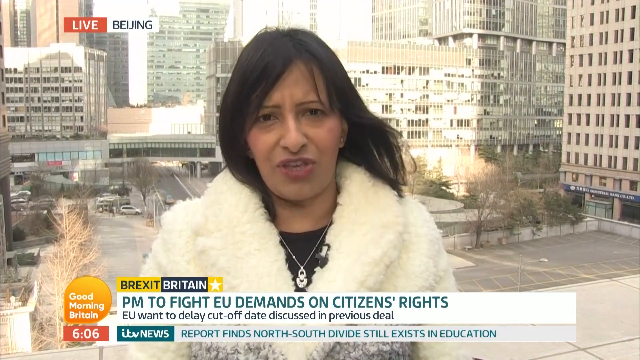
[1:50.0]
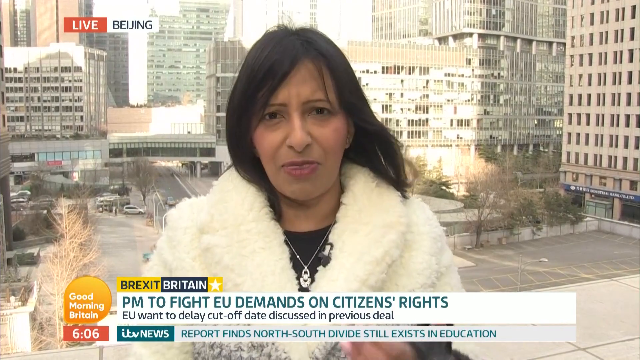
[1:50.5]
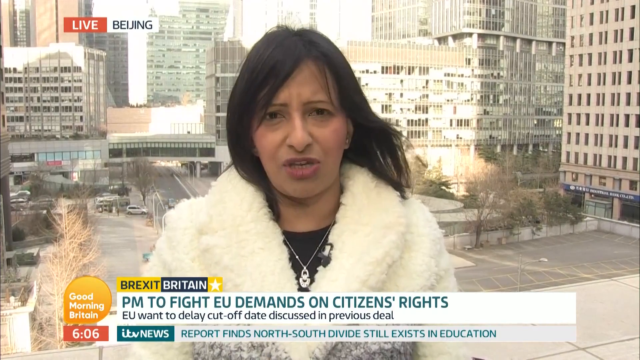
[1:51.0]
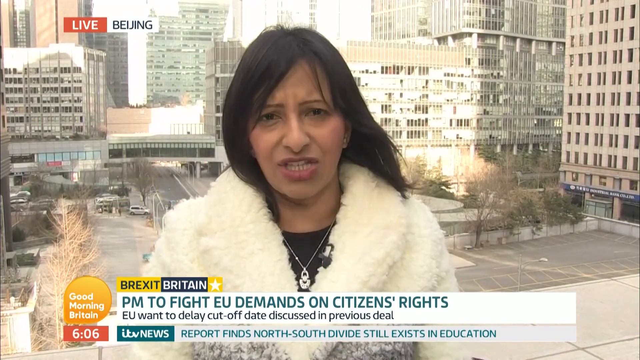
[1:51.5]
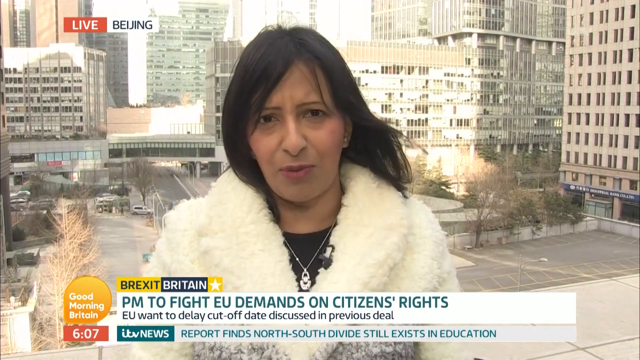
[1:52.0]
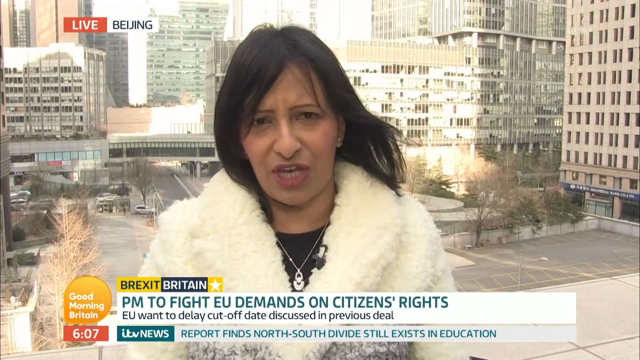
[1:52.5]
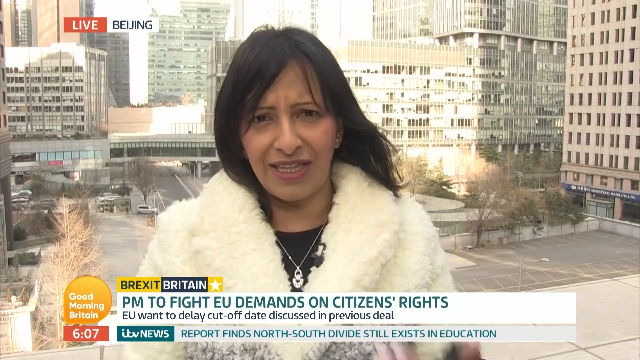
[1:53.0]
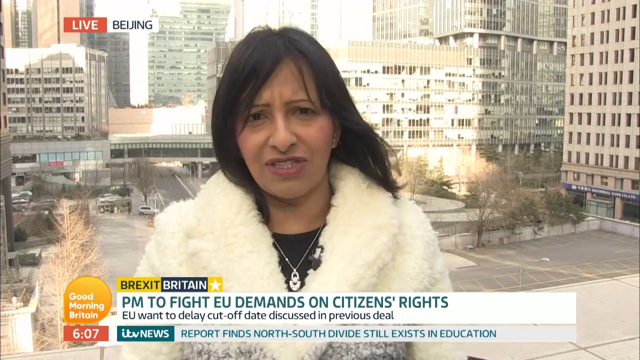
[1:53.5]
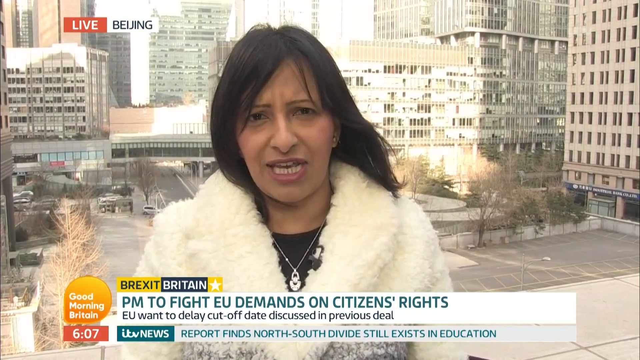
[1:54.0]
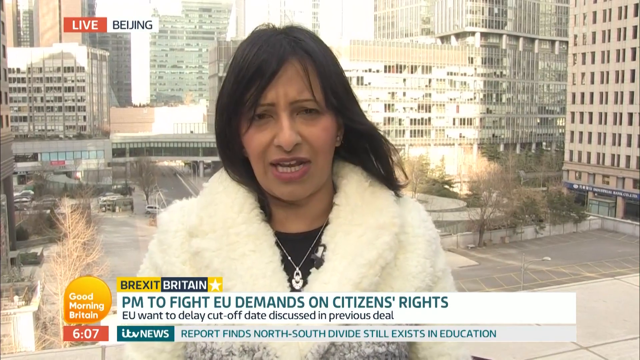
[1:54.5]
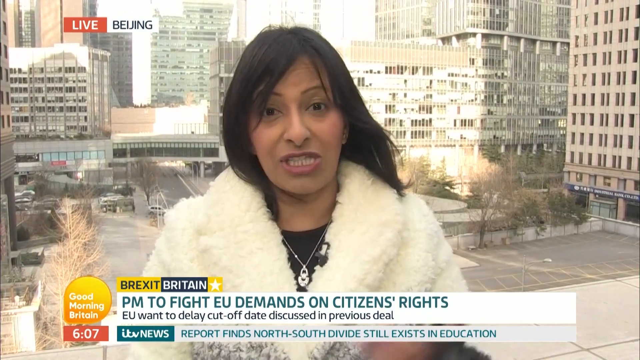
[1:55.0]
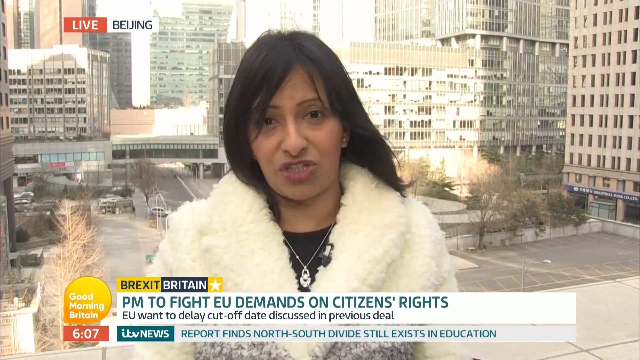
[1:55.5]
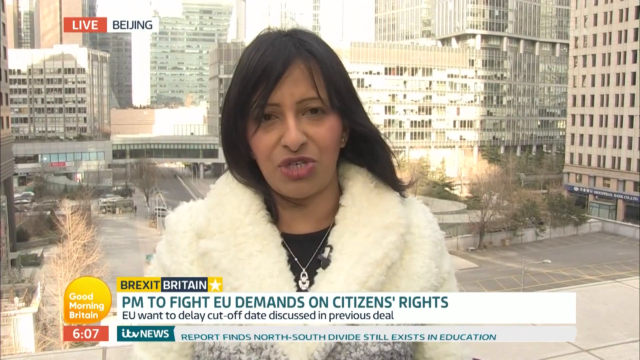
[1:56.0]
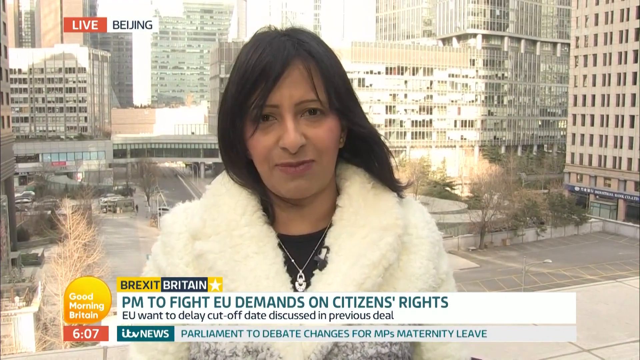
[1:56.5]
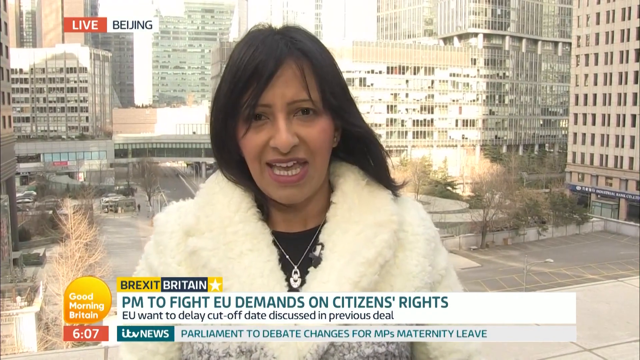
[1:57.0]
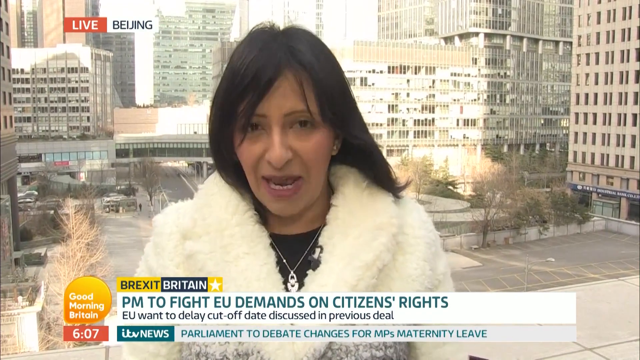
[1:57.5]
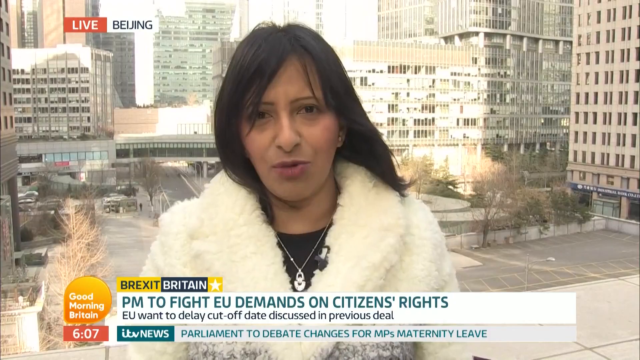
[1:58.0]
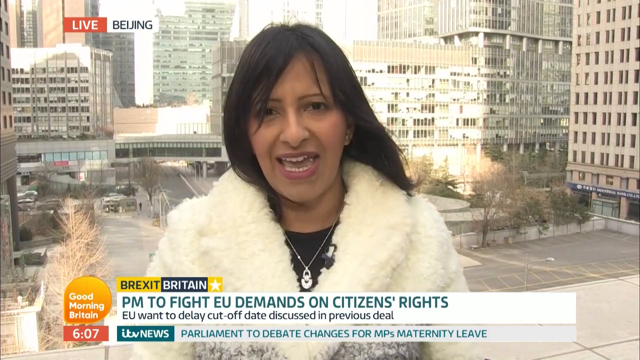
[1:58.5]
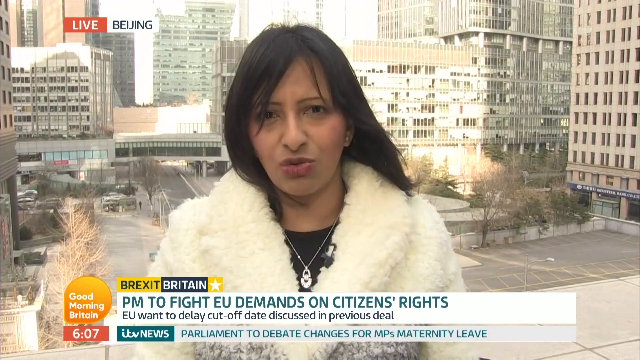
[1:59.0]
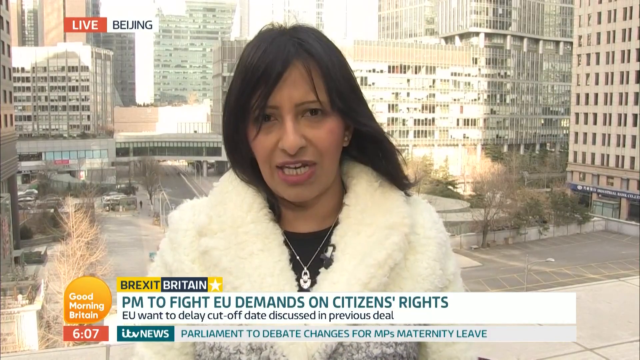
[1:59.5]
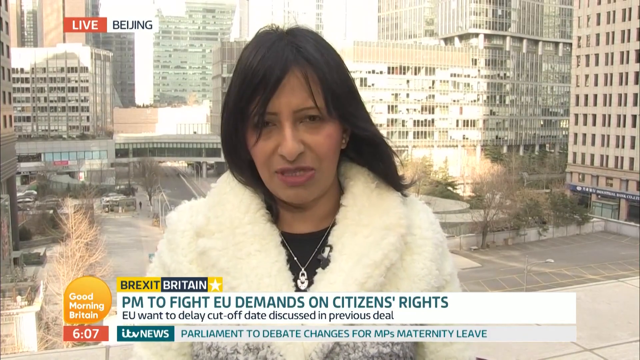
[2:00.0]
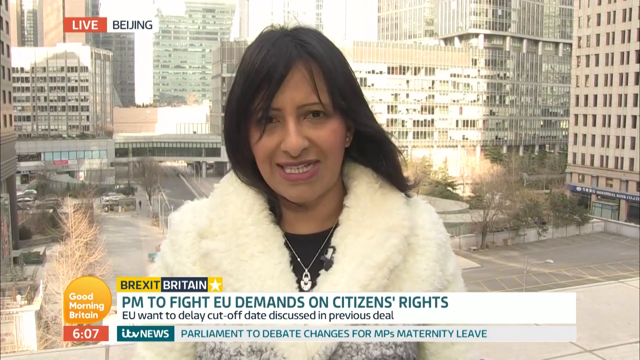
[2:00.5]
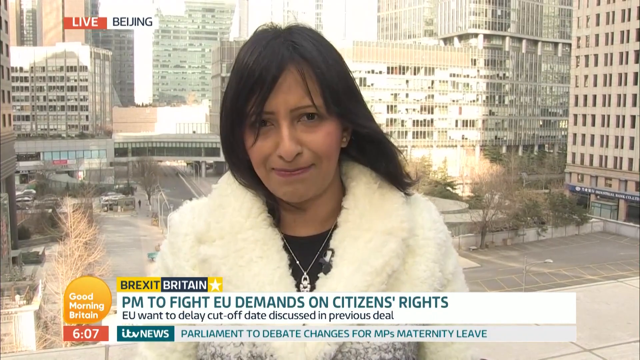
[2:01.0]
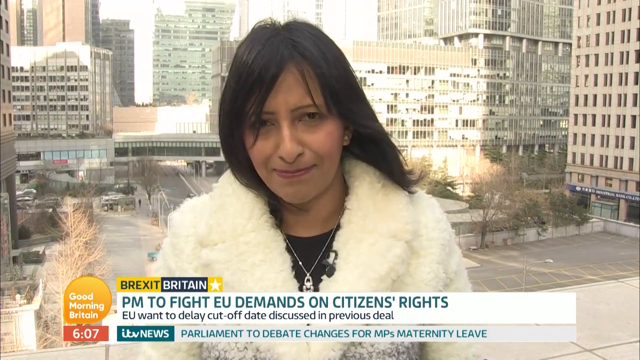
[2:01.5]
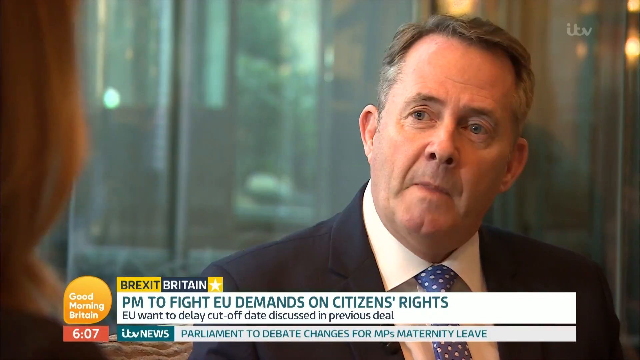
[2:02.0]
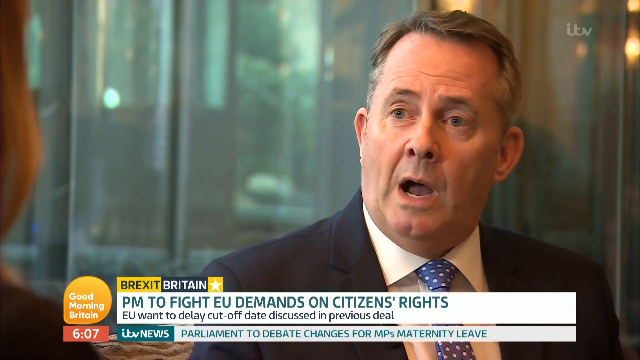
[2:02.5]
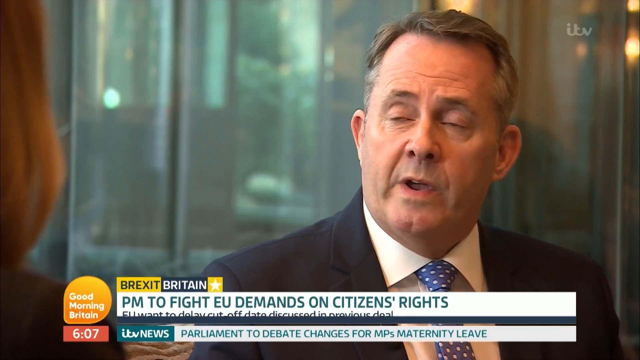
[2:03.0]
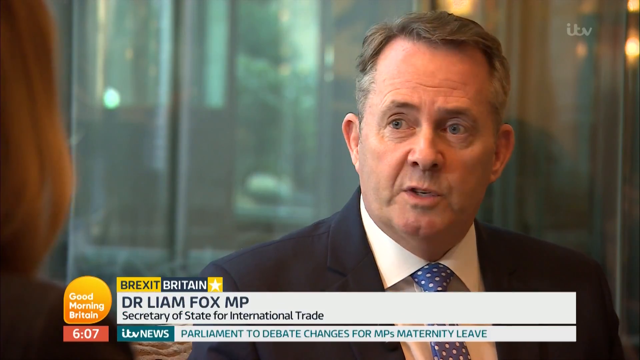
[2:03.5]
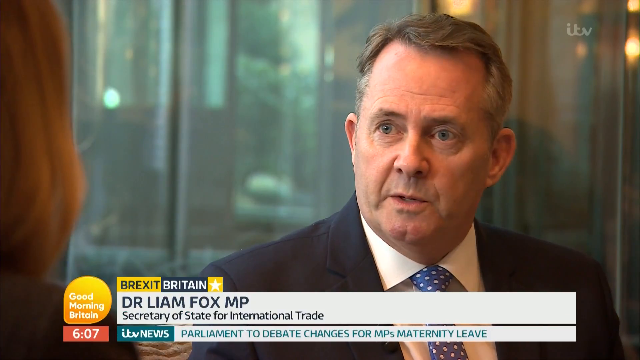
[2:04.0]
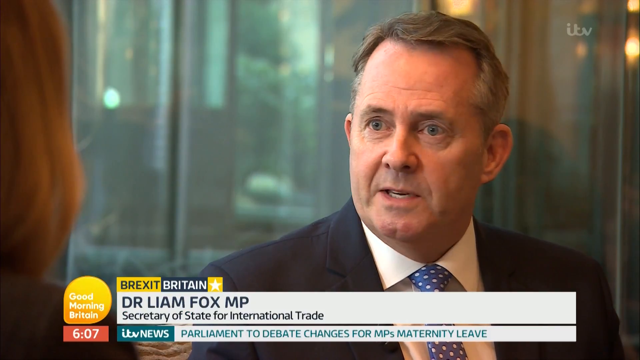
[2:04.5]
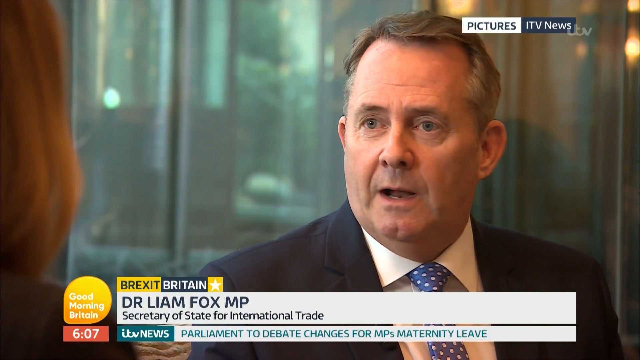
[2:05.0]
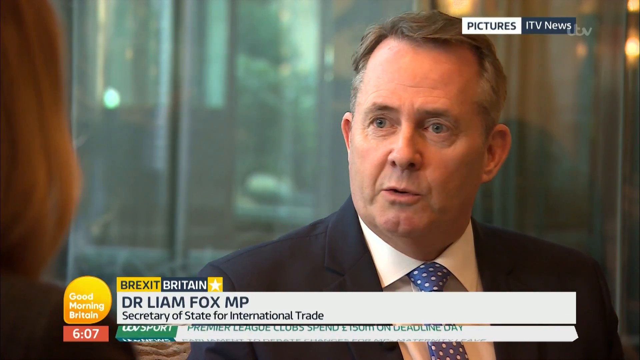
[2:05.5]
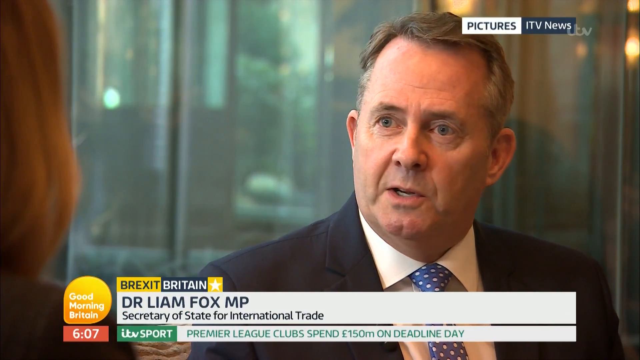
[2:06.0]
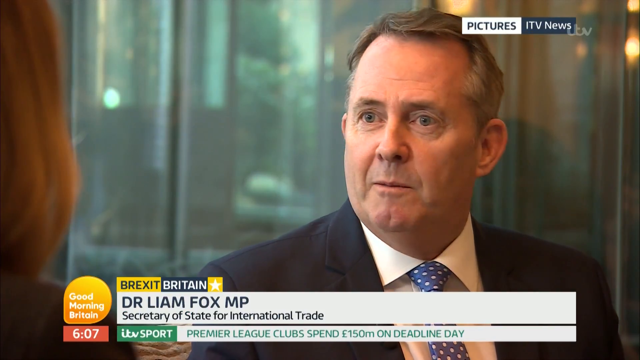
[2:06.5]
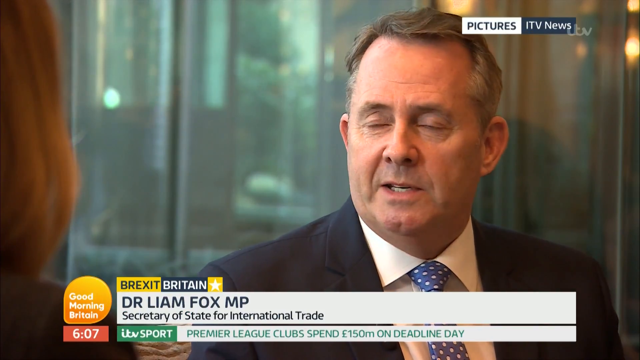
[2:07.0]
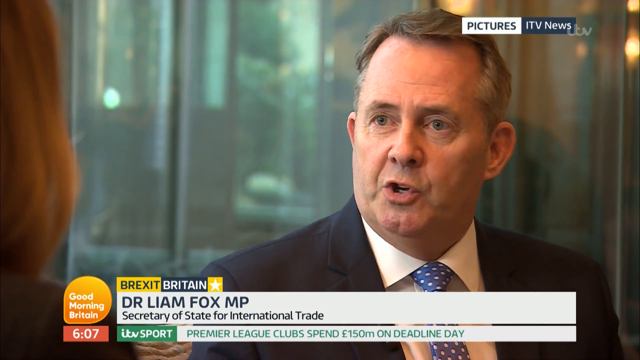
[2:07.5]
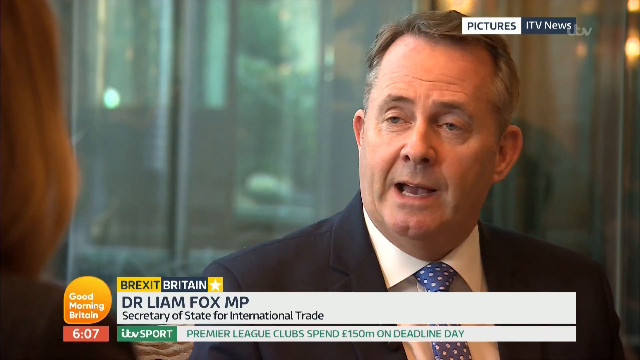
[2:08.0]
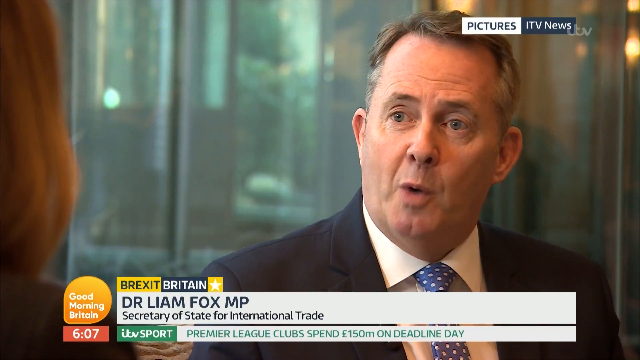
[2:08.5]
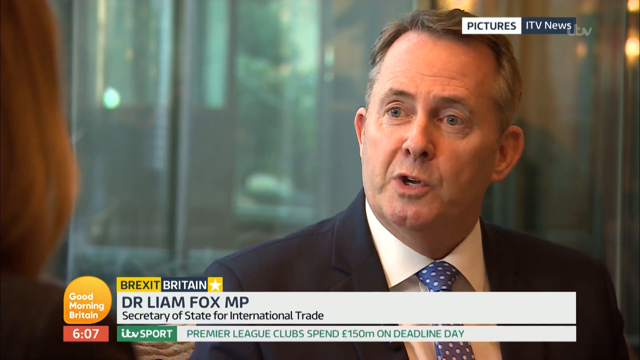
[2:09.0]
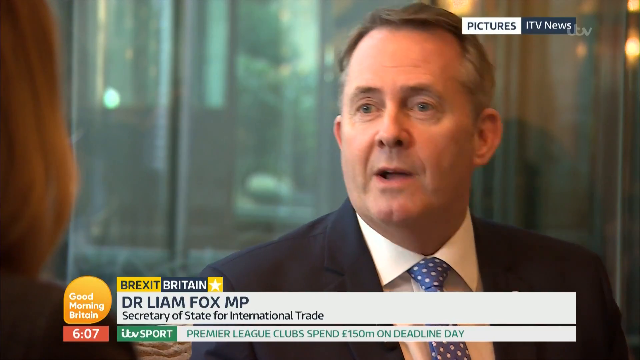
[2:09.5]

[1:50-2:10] Good Morning Britain reports live from Beijing. The woman, who seems to be a reporter, wears a white puff jacket; it seems cold, and her hair moves in the wind. Text underneath her says "PM to fight EU demands on citizens' rights. EU wants to delay the cut-off date discussed in the previous deal." The broadcast then moves to another scene in which a woman interviews a man who looks like an American politician: Dr. Liam Fox MP, the Secretary of State for International Trade. He is white and wears a suit with a blue and white spotted tie. After the interview, the broadcast cuts away quickly.